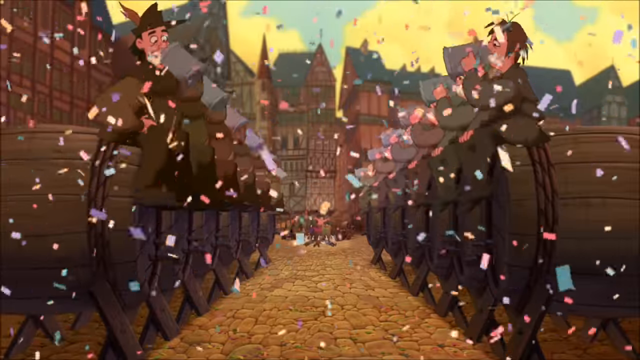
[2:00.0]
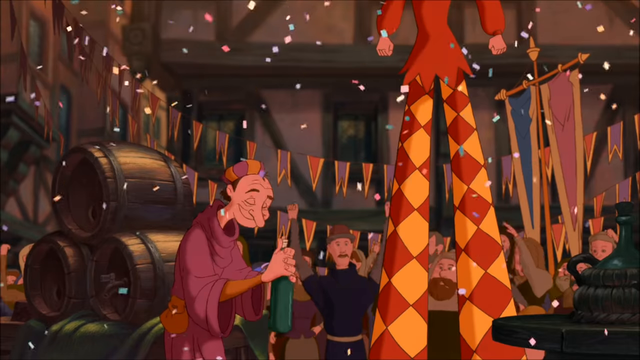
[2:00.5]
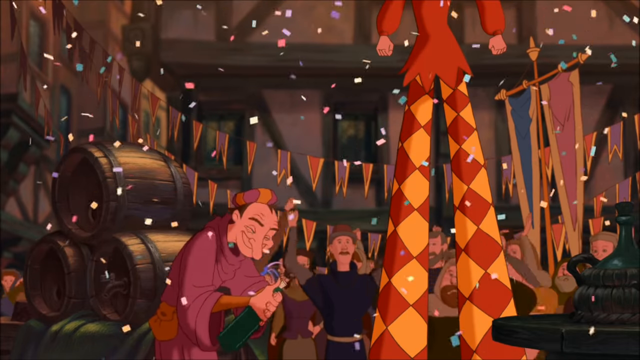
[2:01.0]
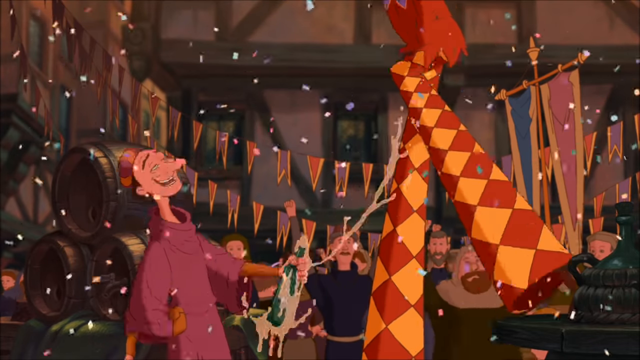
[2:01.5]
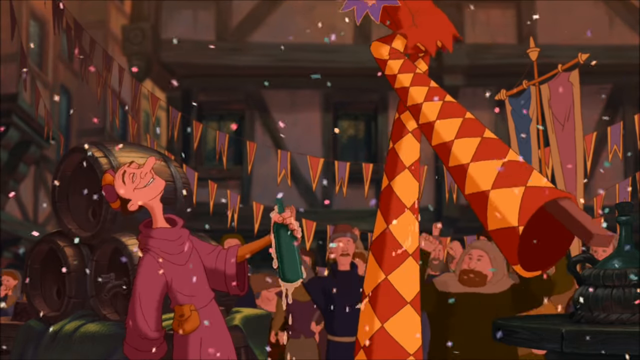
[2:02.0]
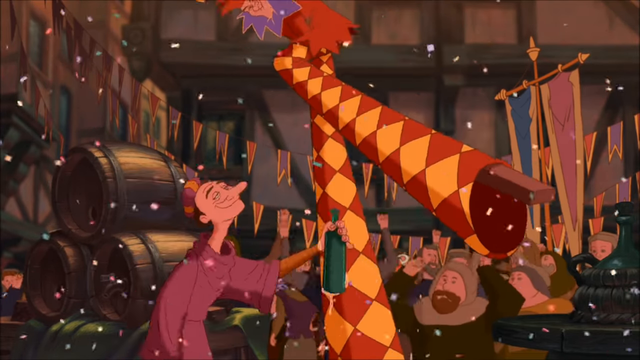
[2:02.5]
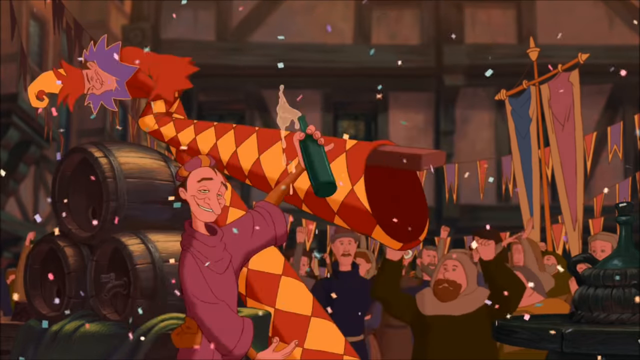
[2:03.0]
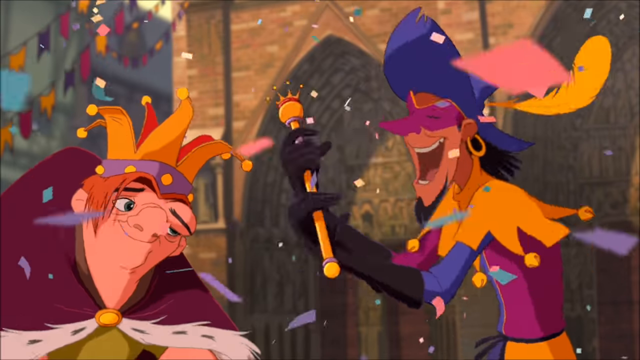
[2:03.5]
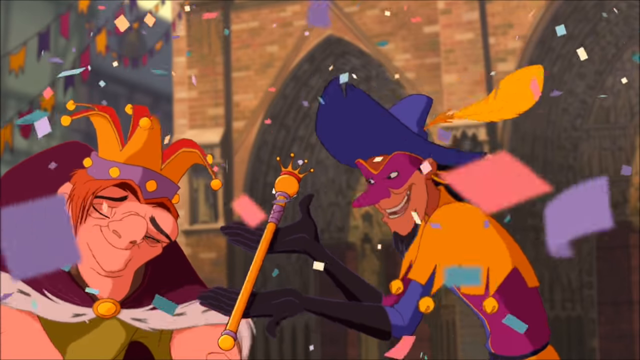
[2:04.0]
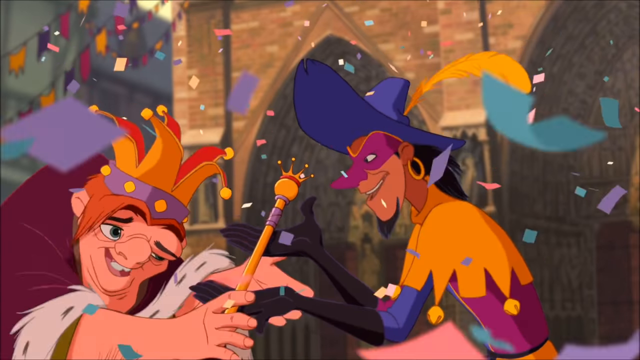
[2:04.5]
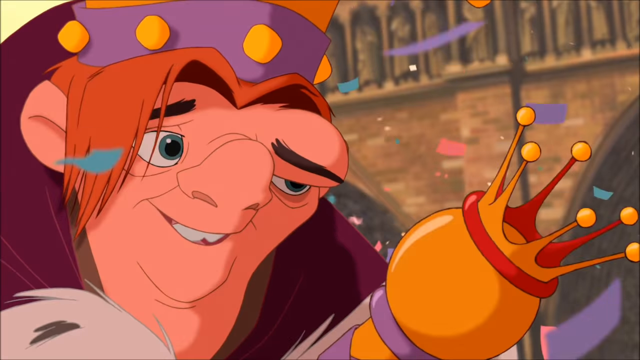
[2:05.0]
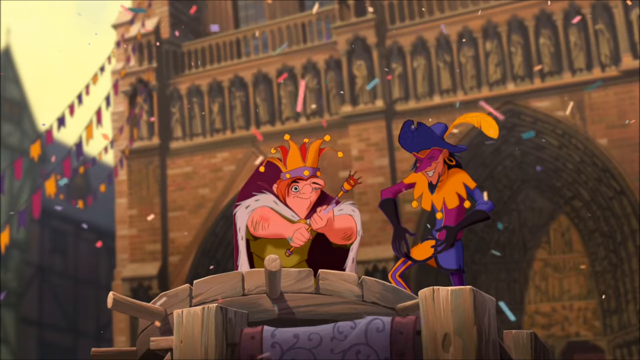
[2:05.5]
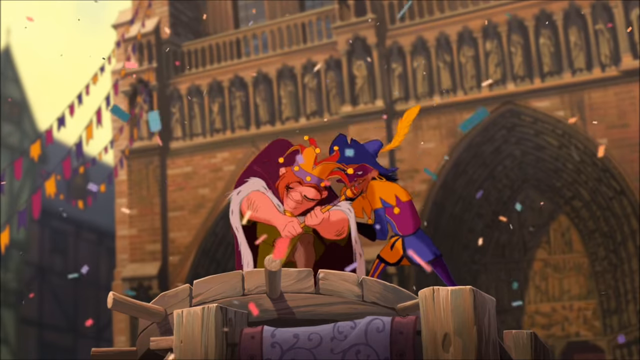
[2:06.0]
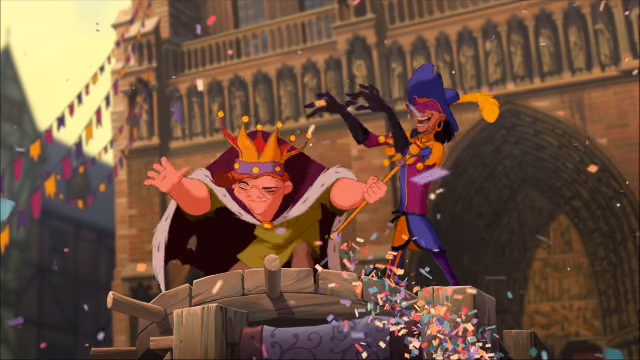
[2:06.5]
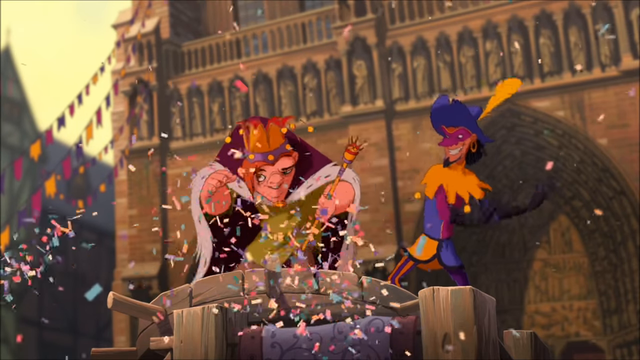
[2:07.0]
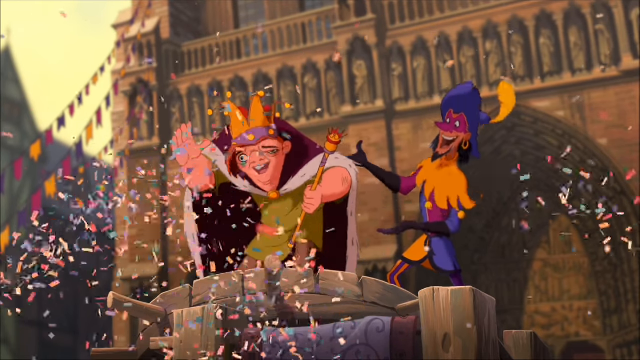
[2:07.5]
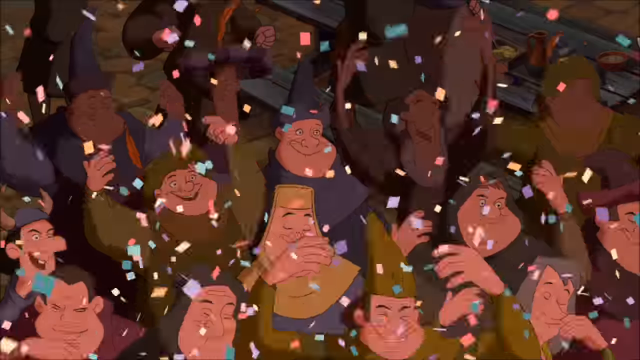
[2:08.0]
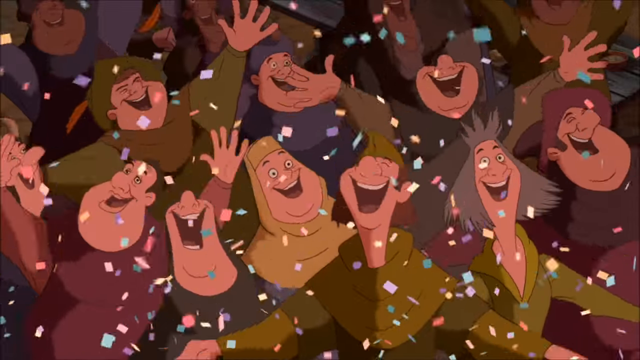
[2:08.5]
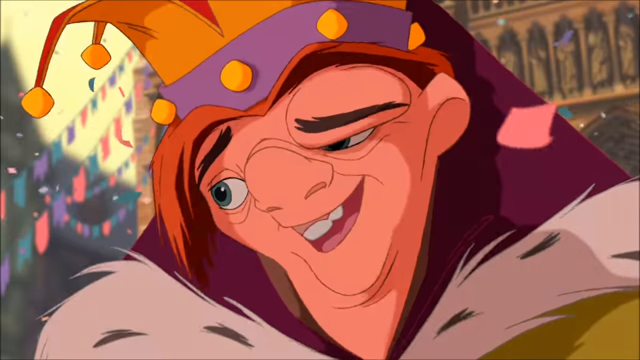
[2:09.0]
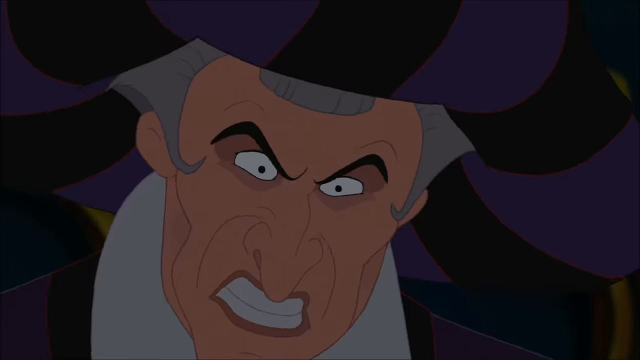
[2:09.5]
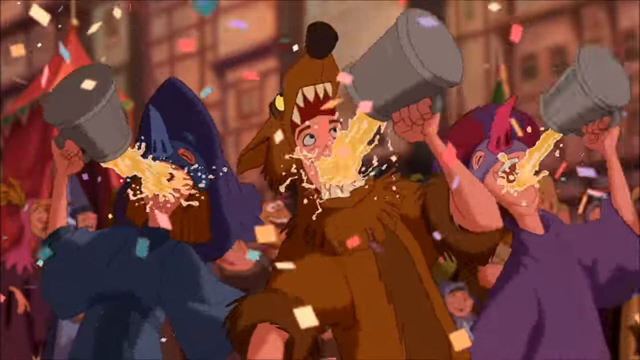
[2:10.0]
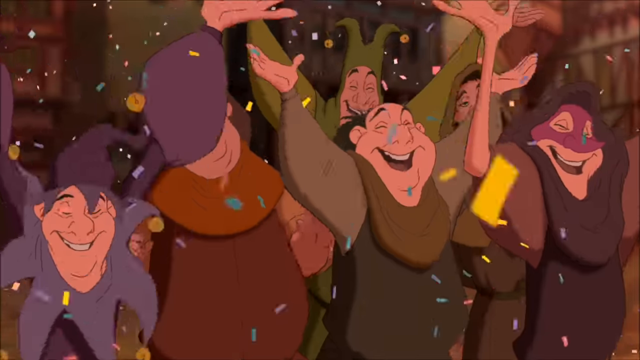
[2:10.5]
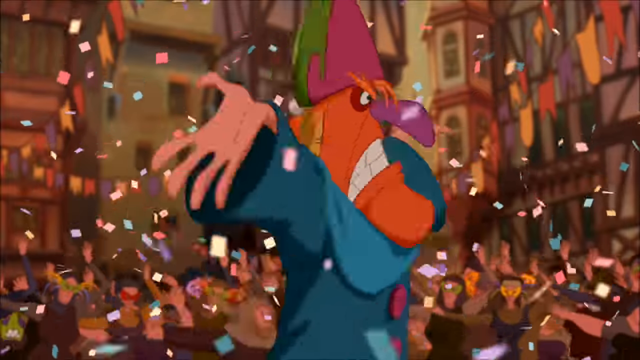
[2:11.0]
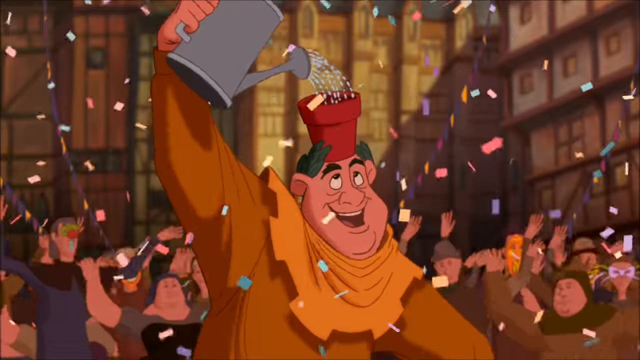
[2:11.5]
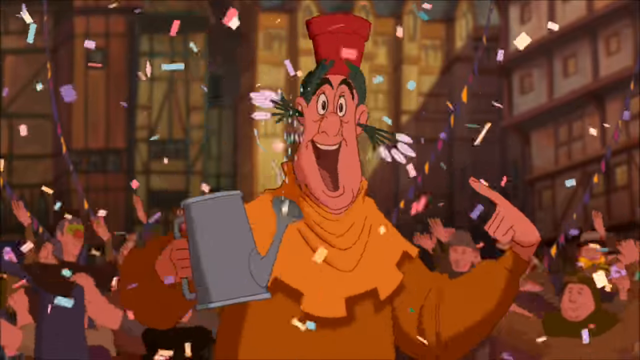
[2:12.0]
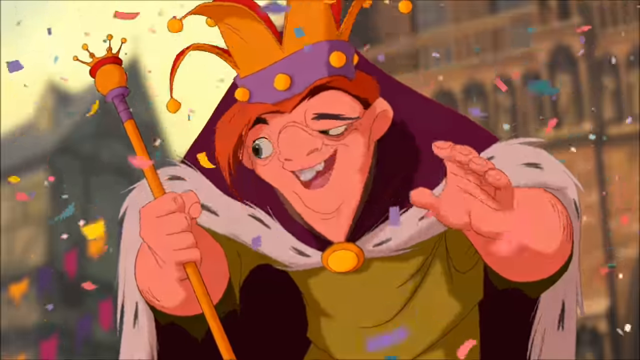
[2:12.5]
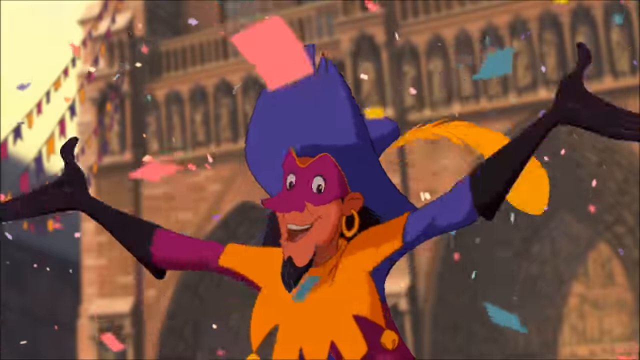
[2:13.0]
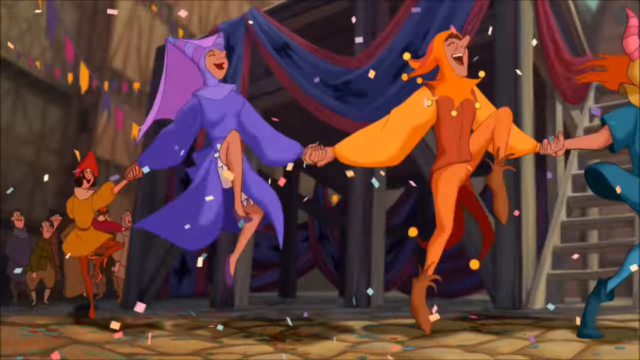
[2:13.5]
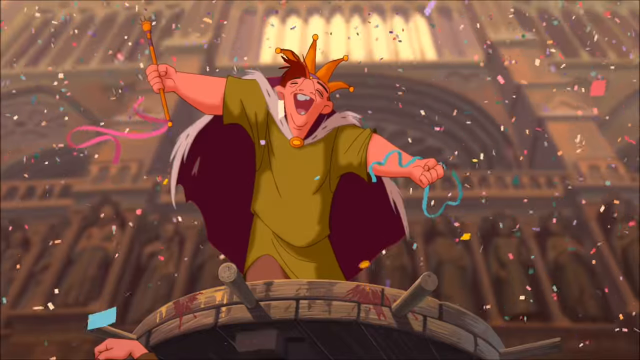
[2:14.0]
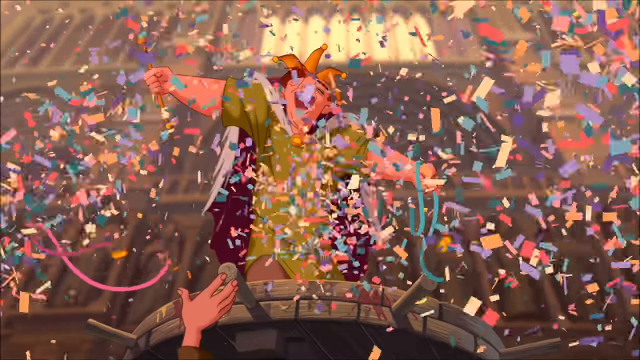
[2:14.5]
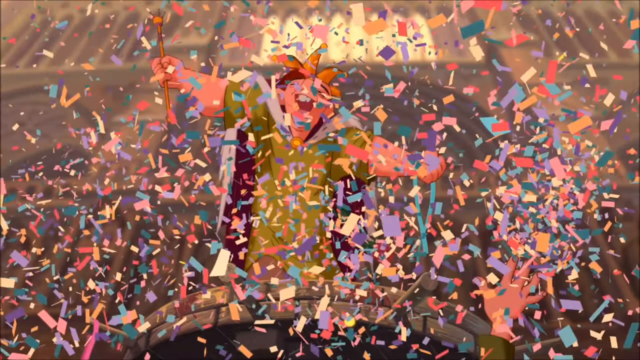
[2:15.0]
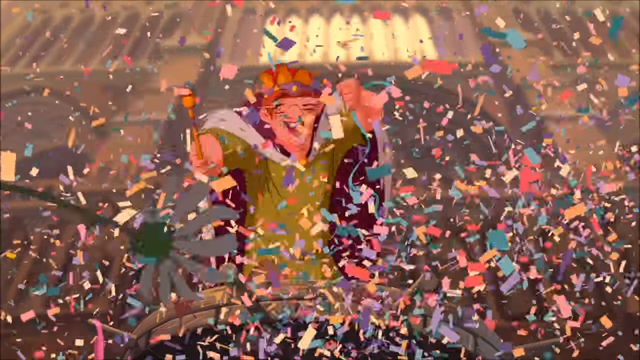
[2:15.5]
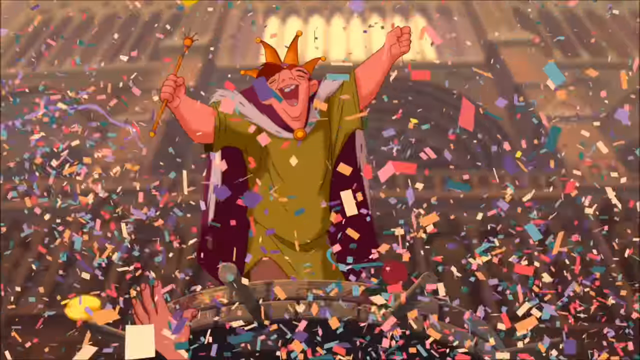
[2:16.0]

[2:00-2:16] The new king smiles broadly and a bit ashamedly as confetti keeps raining down. Behind him the jester gestures toward him as if presenting the new King of Fools. The crowd cheers wildly, throwing confetti and laughing. The scene switches to the distinguished man, who wears a big purple hat and looks very angry, with very wide eyes, a beady gaze and a grimace, as if quite offended by all this. The crowd cheers wildly again. The jester hands the new king a scepter, which he holds in his hand, and gives him a huge pat on the back.